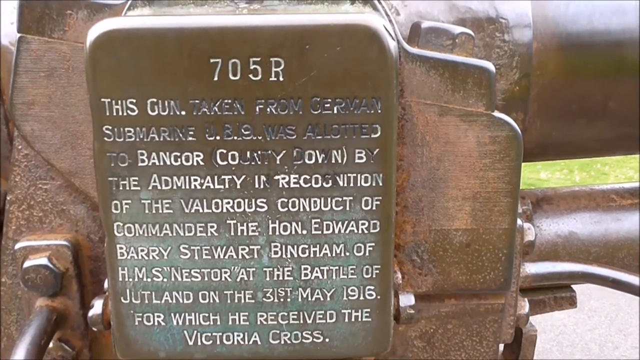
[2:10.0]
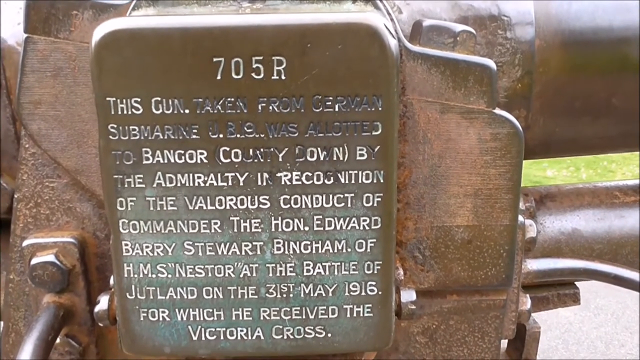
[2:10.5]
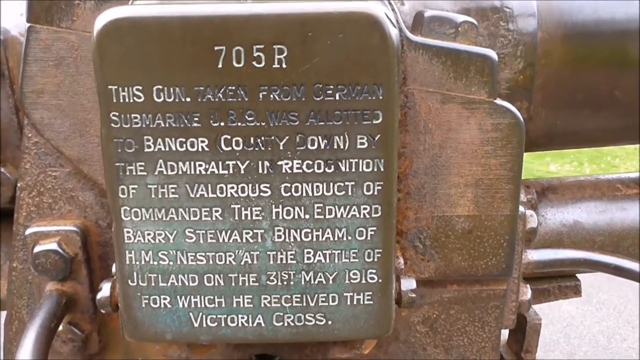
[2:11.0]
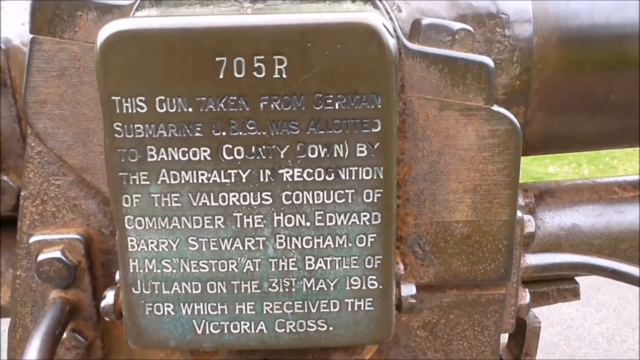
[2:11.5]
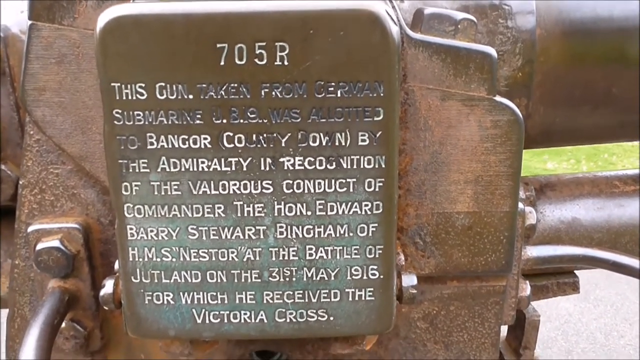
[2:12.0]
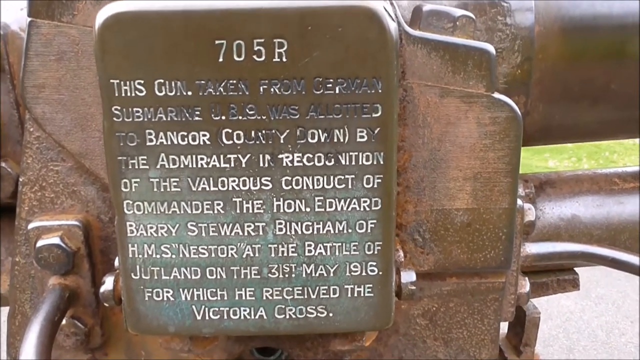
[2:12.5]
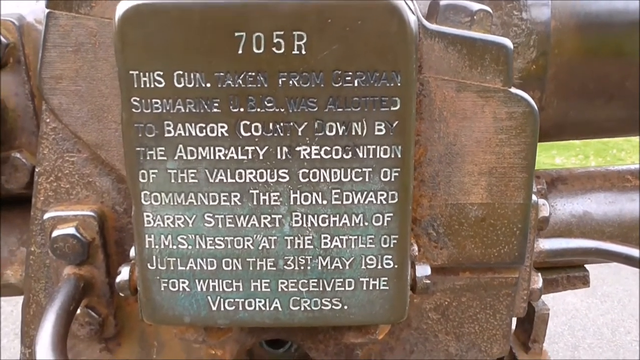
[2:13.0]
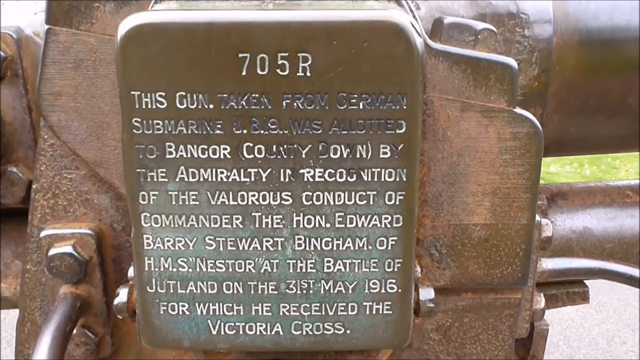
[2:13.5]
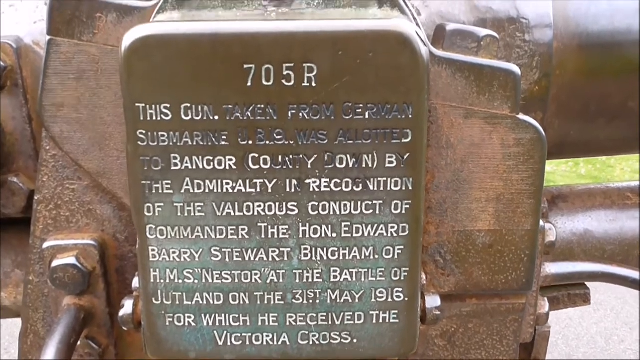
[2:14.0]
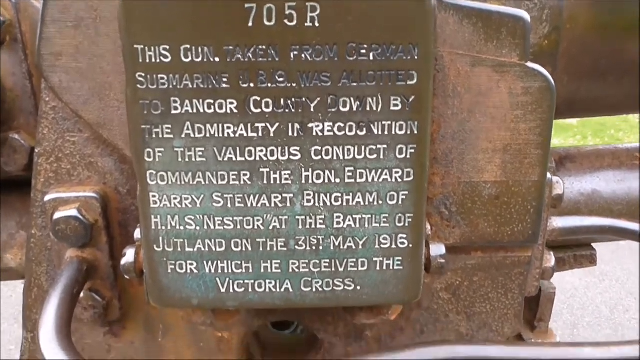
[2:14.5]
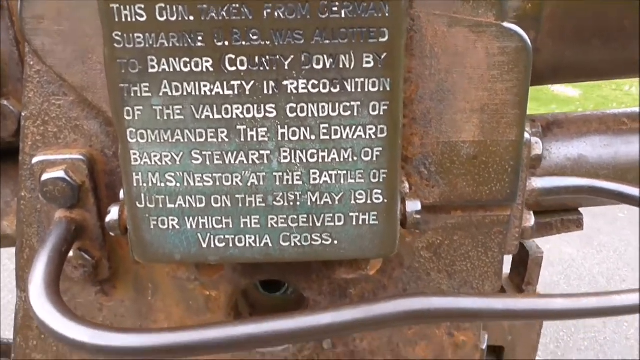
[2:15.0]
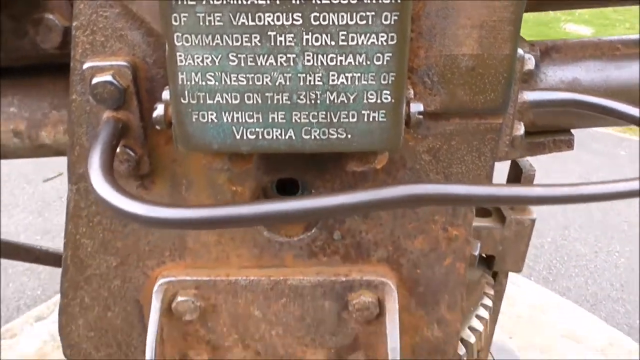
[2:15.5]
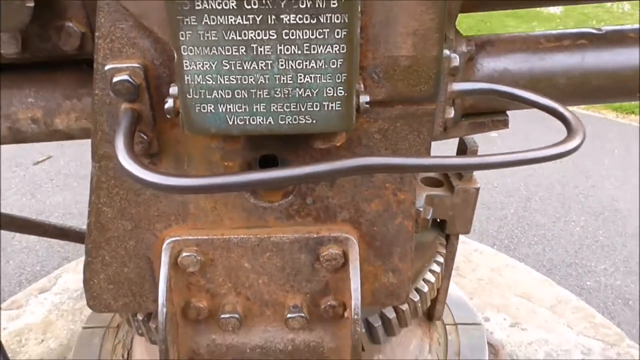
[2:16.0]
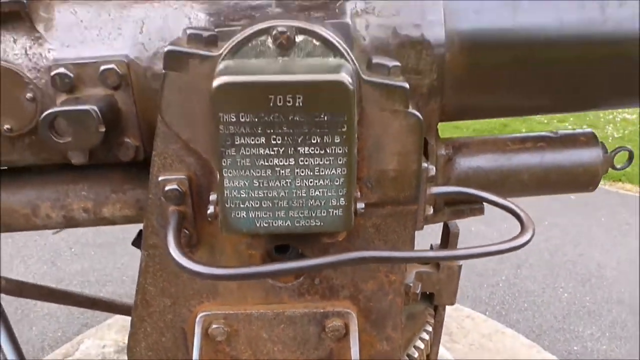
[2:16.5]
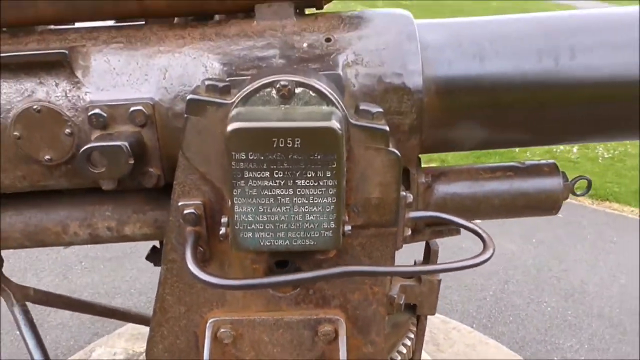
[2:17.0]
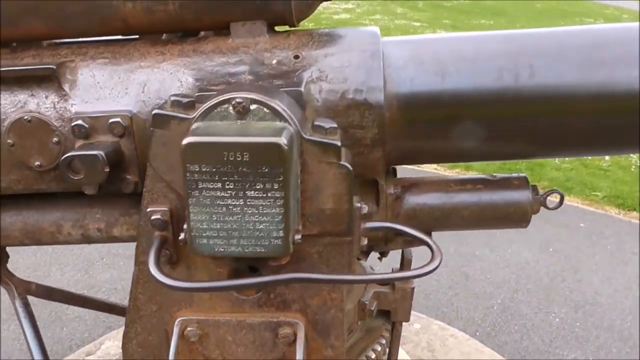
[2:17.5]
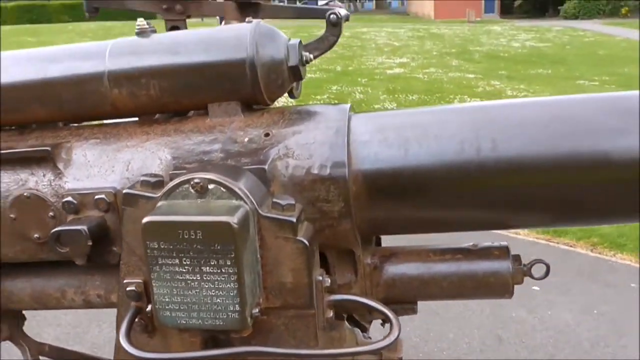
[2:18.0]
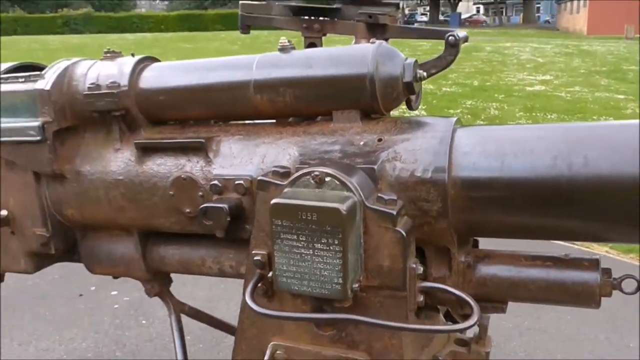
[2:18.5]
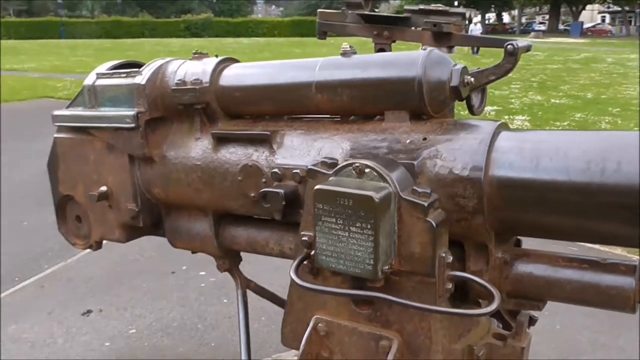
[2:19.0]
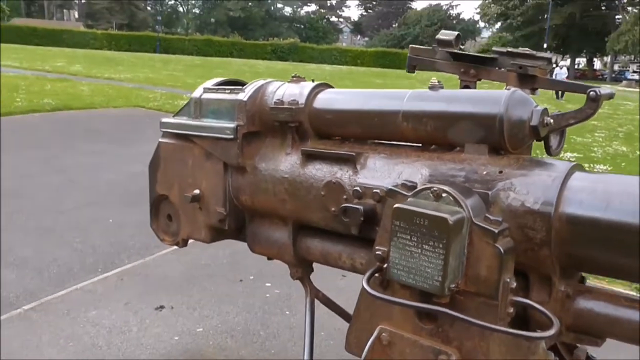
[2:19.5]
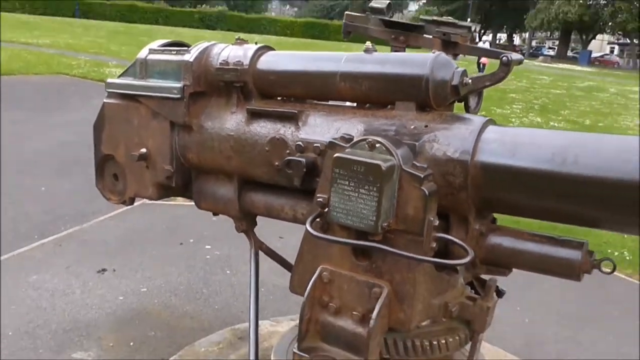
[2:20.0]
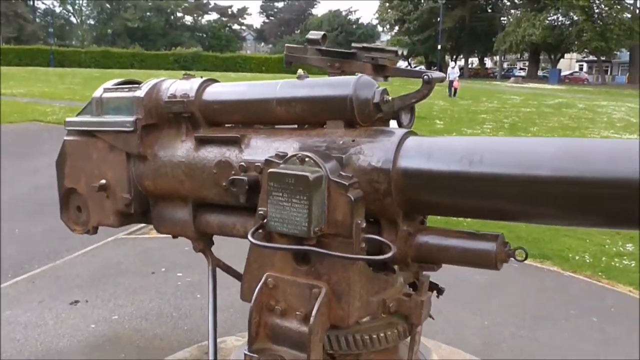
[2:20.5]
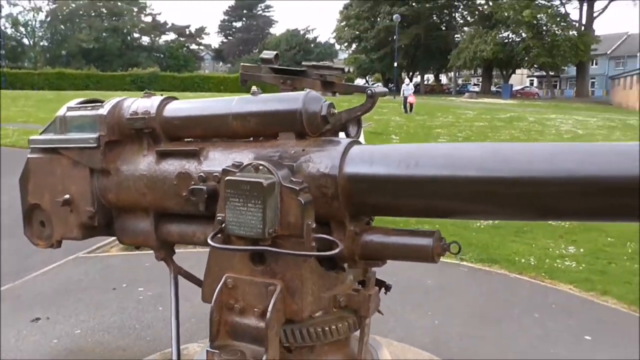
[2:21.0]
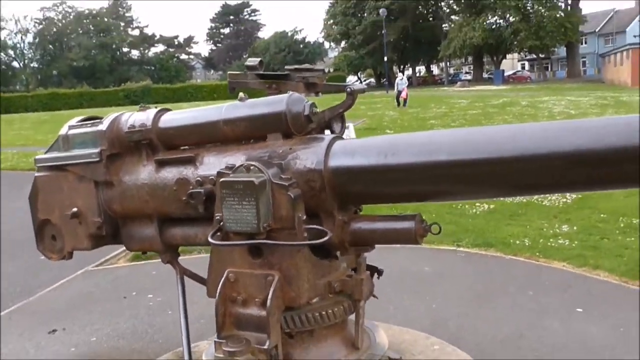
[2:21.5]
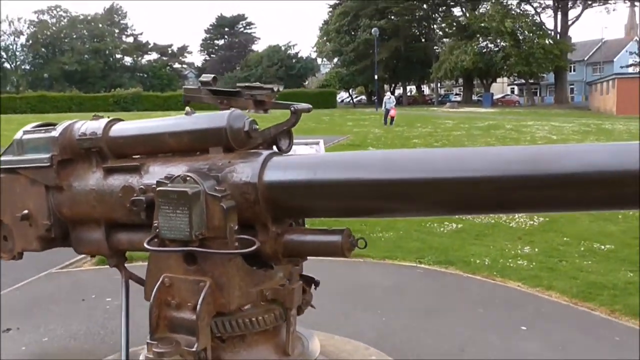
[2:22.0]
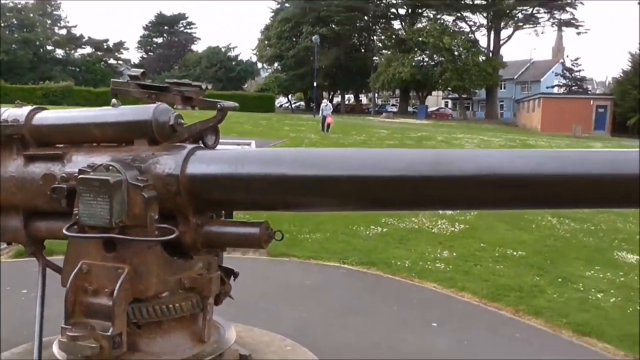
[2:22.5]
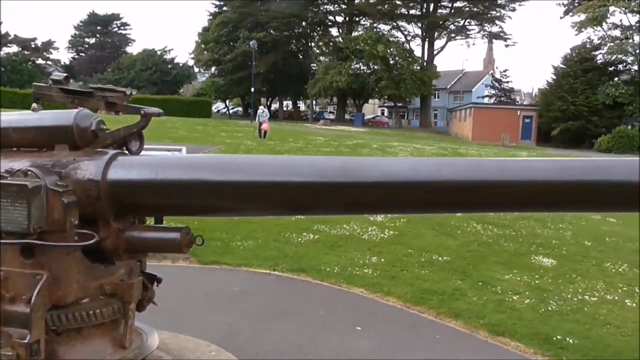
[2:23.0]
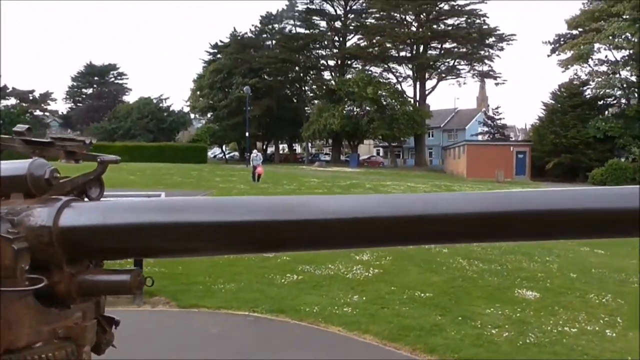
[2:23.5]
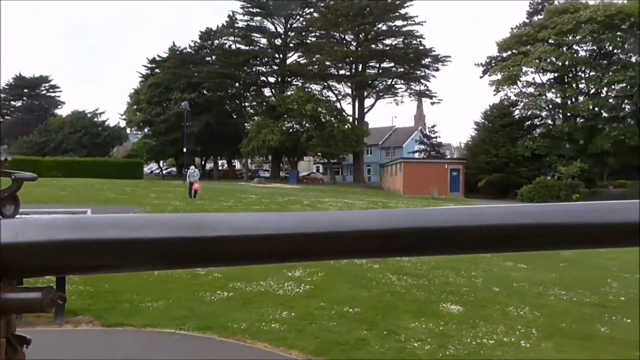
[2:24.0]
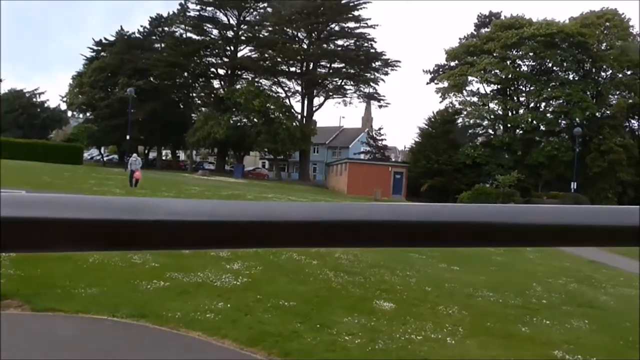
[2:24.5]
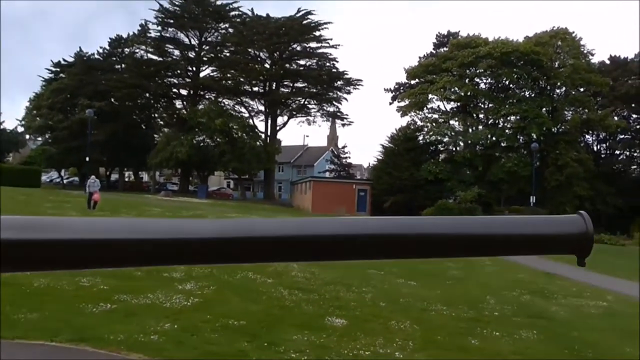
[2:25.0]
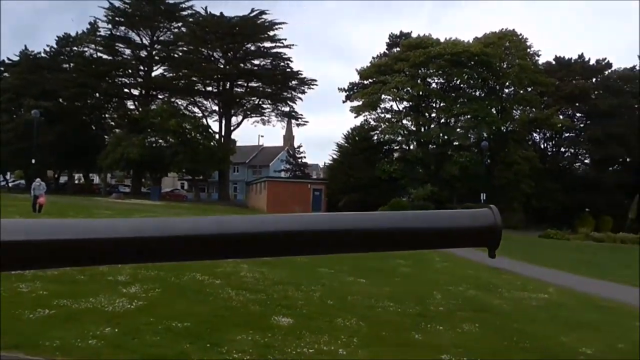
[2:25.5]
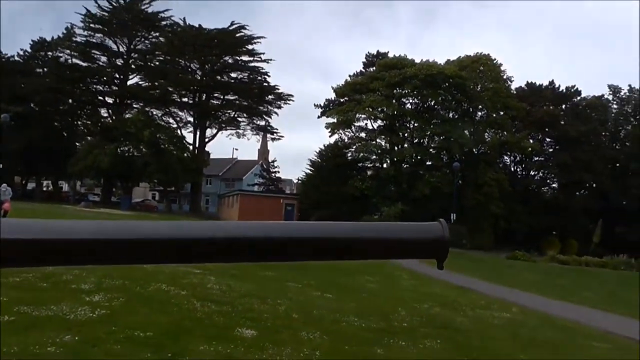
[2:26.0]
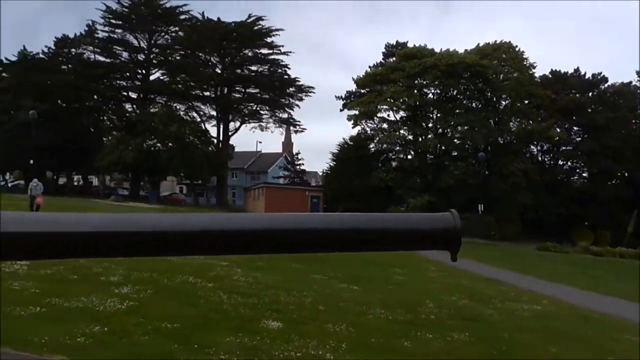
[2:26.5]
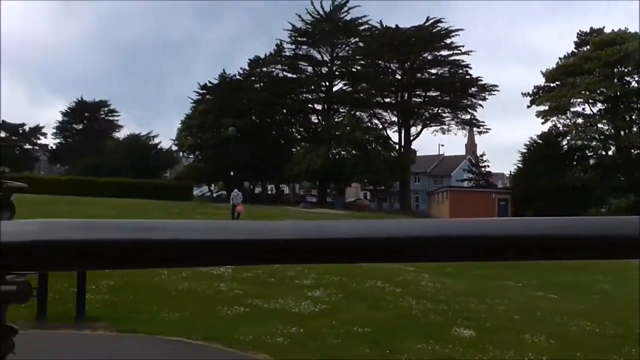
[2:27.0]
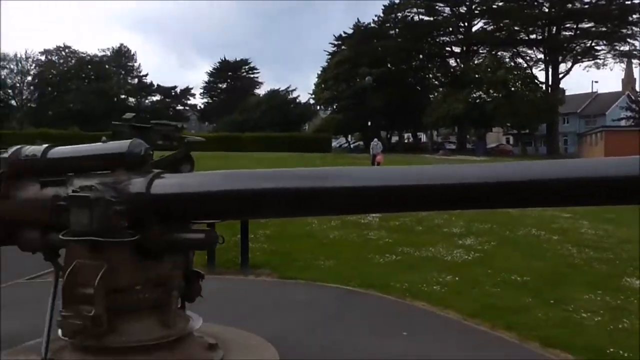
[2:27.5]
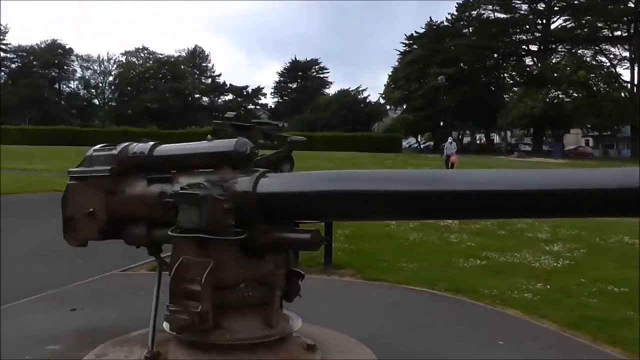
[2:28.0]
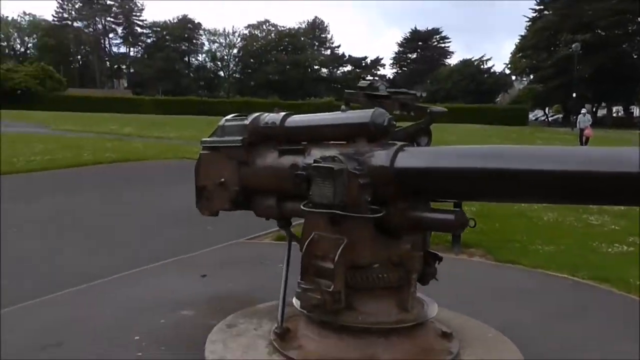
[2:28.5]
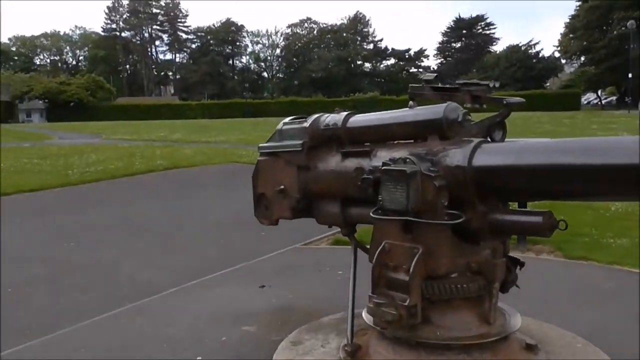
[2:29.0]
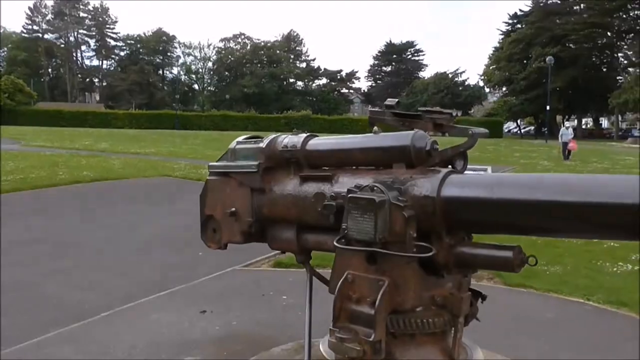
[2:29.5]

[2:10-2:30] A close-up shows the plaque on the side of the artillery gun displayed in the park, which states that the gun was taken from a German submarine during the Battle of Jutland in 1916. The camera then pulls away so the whole gun is visible. It looks as though it is made of bronze, with the metal slightly tan and gray in spots. As the camera pulls away, the park beyond the gun comes into view: the gun is in a paved area, and beyond that is a green lawn with wildflowers throughout. A very high hedge is off to the left of the screen, and in the background are trees and what looks like a city street with two-story buildings. Someone walks across the grass in the middle of the screen. As the camera pans to the right, more of the park is visible, and to the left more of the lawn with the hedge beyond it.